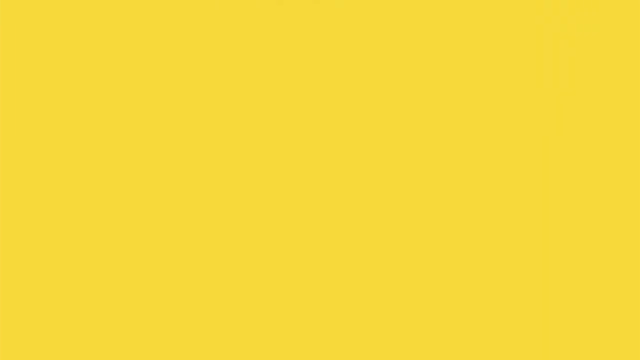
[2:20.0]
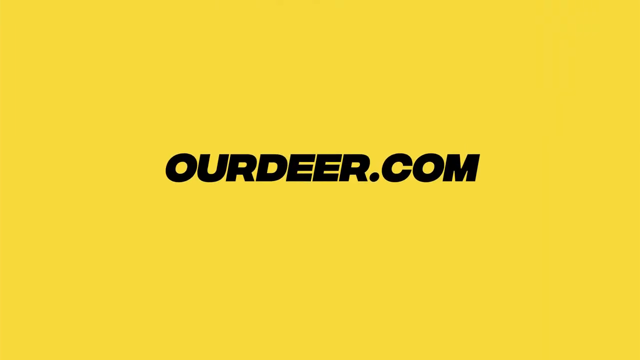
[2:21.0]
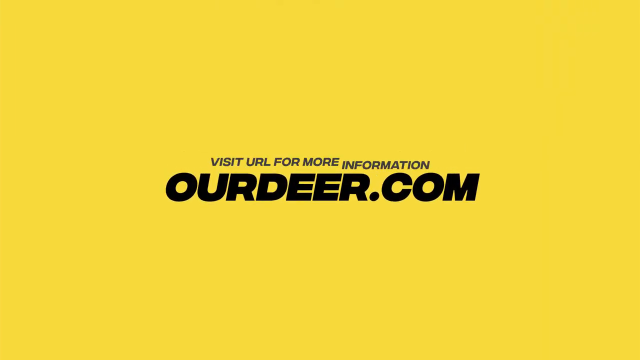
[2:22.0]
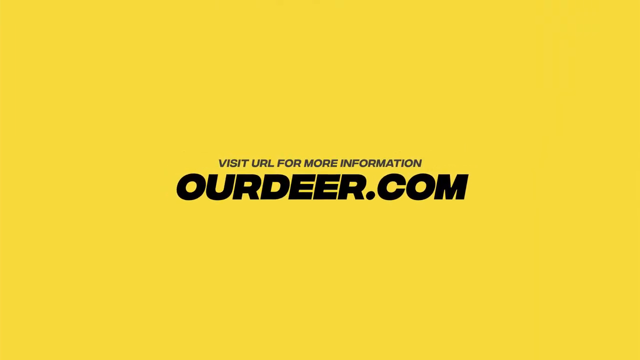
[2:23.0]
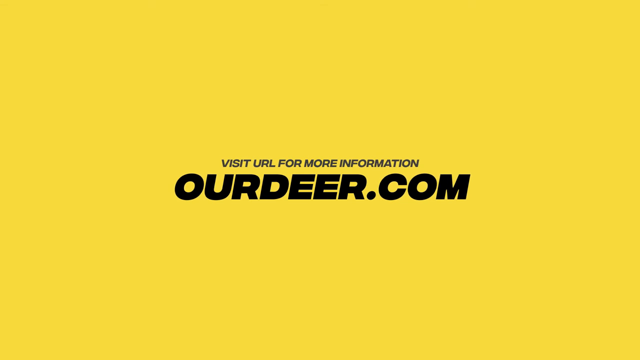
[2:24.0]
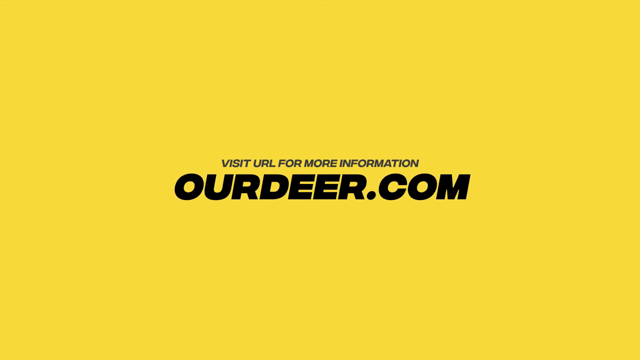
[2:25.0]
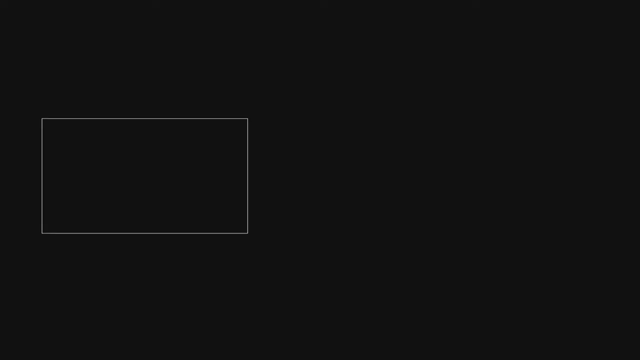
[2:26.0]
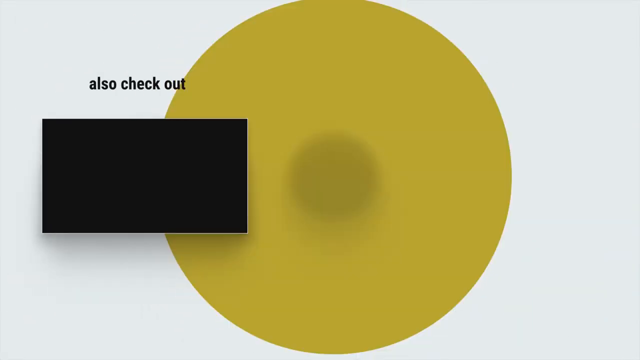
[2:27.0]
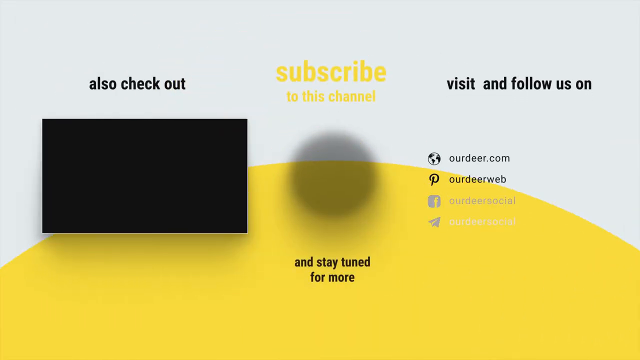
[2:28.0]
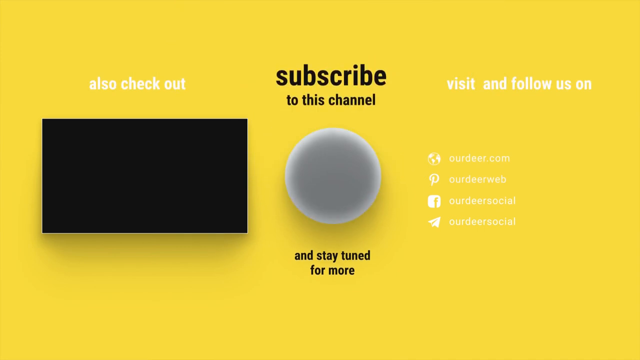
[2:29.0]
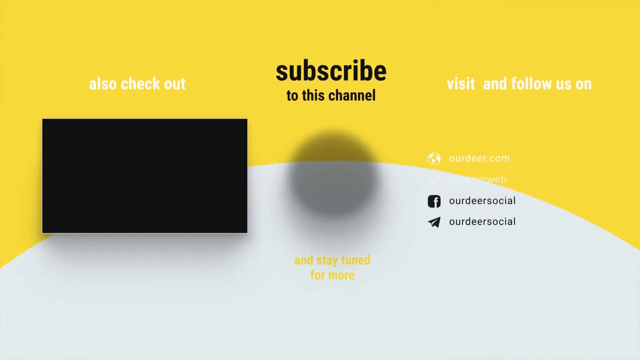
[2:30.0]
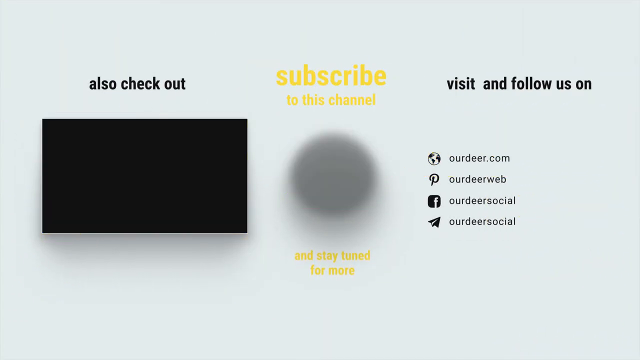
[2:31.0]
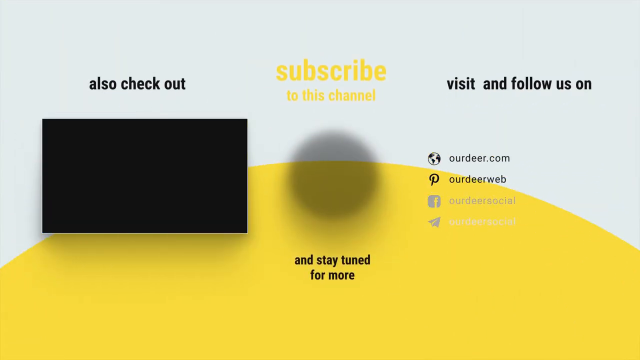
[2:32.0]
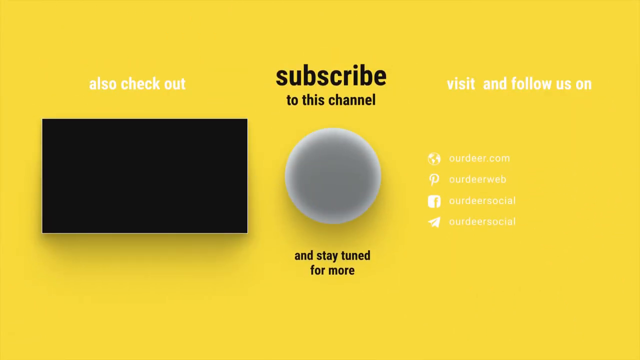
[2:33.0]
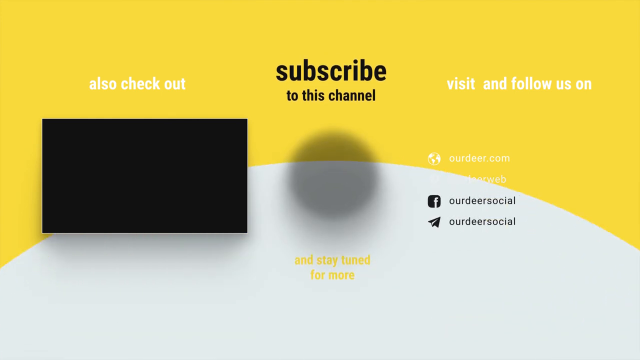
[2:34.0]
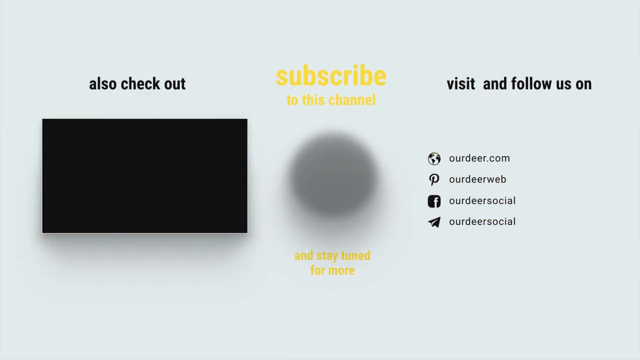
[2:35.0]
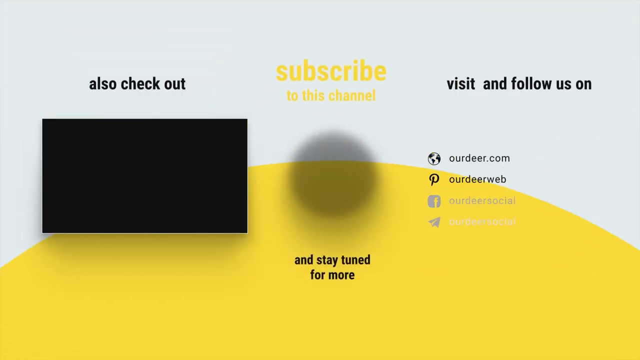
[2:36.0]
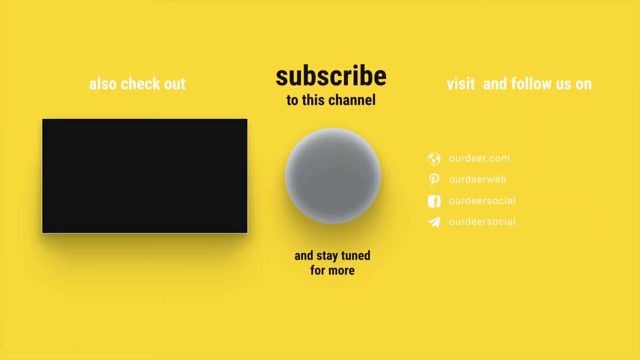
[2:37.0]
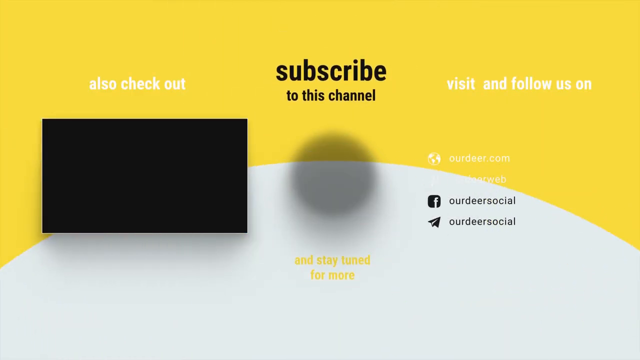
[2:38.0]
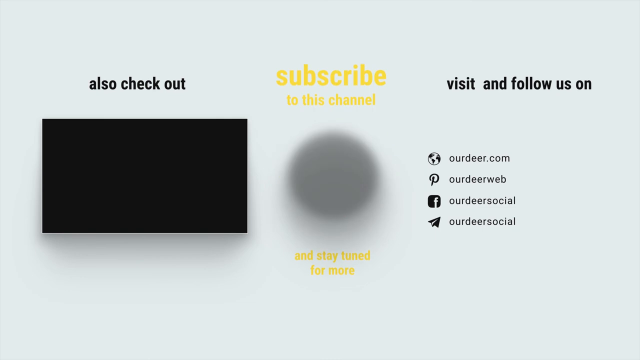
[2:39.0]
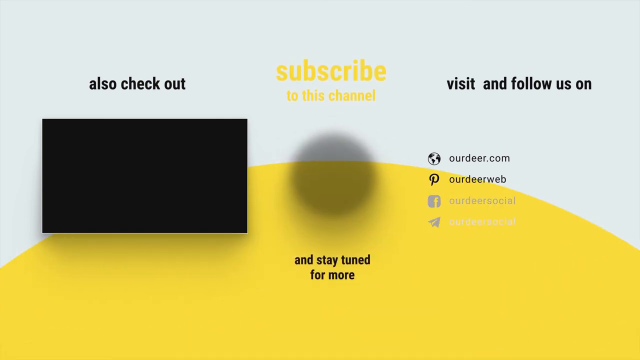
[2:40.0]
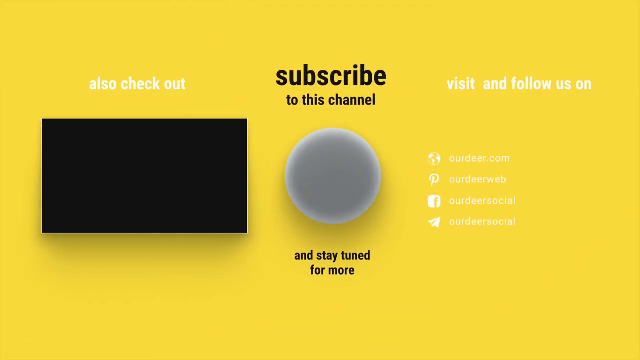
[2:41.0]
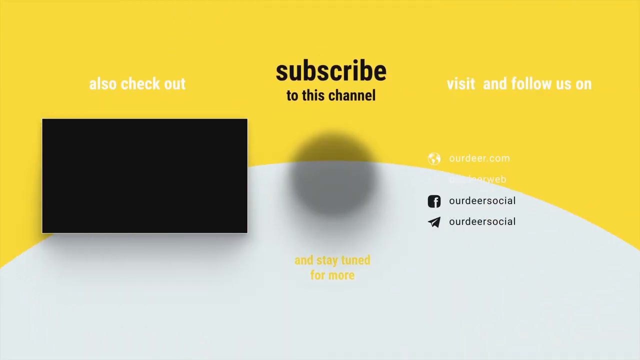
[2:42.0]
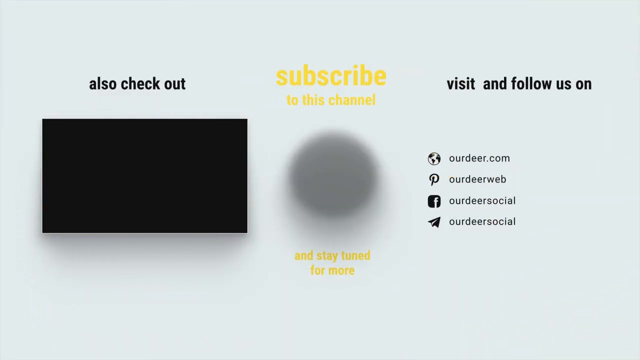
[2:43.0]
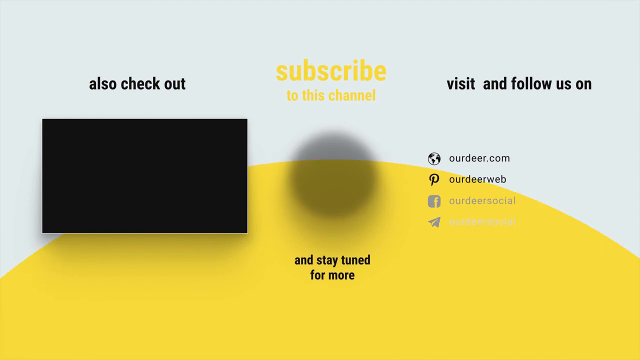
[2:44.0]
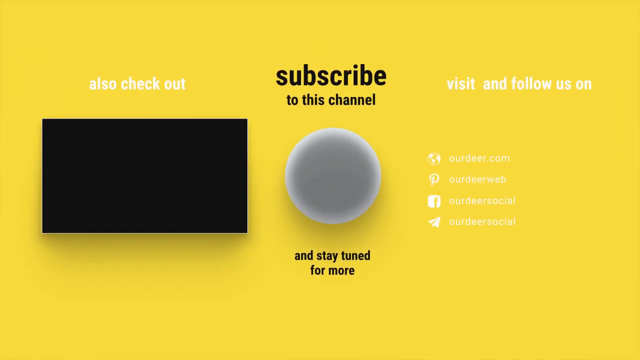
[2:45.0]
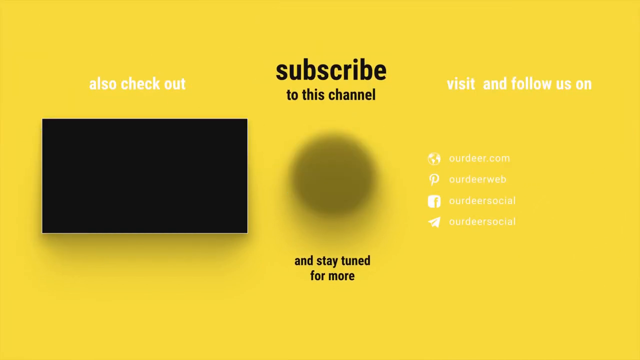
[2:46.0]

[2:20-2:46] A yellow screen shows "outdeer.com" in black in the middle, with "visit URL for more information" above it, and it holds on this screen. The yellow then shrinks into a small yellow circle, which goes back across the screen. A black box reads "also check out"; in the middle it says "subscribe to this channel", to the right "visit and follow us", "outdeer.com" and "outdeer web", and at the bottom in the middle "stay tuned for more". The circle closes, and then a bouncing circle alternates between white and yellow several times, ending on yellow.